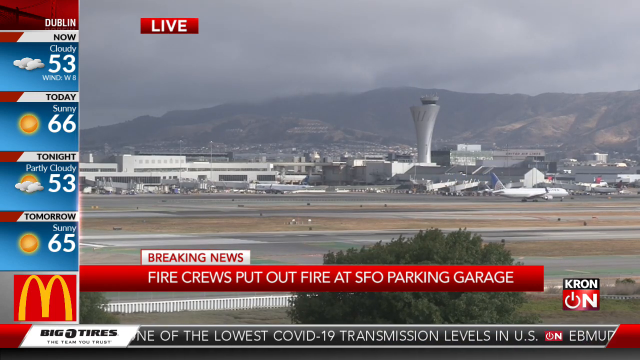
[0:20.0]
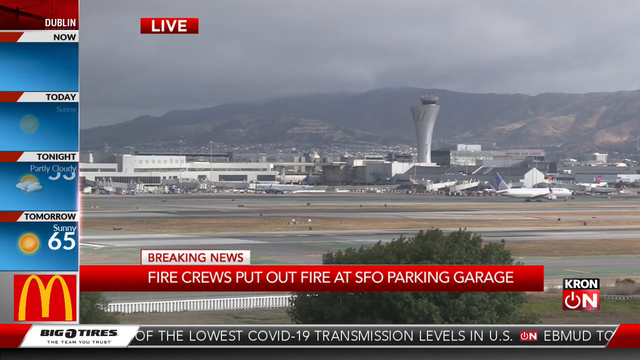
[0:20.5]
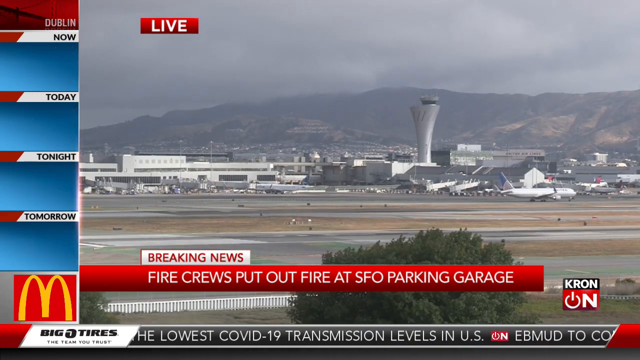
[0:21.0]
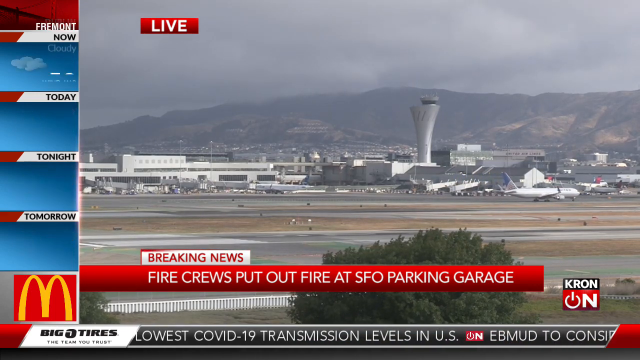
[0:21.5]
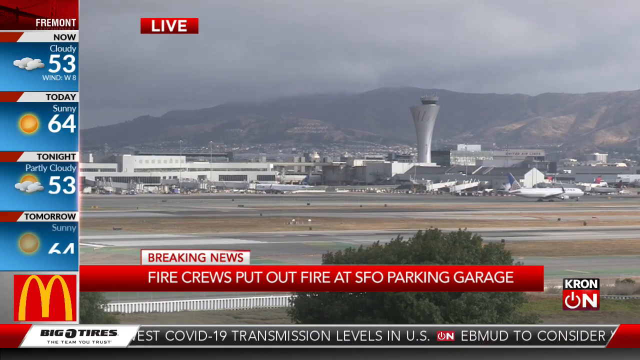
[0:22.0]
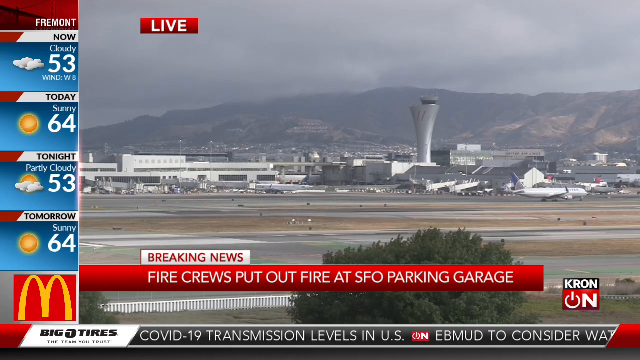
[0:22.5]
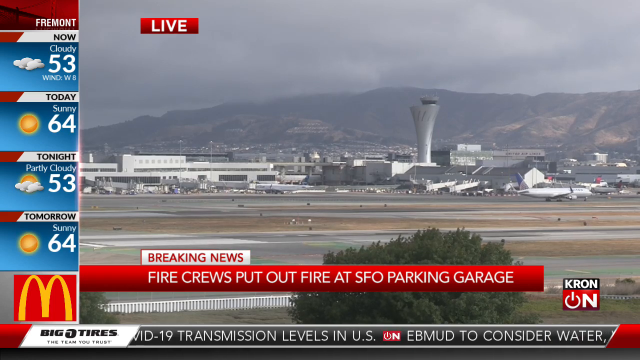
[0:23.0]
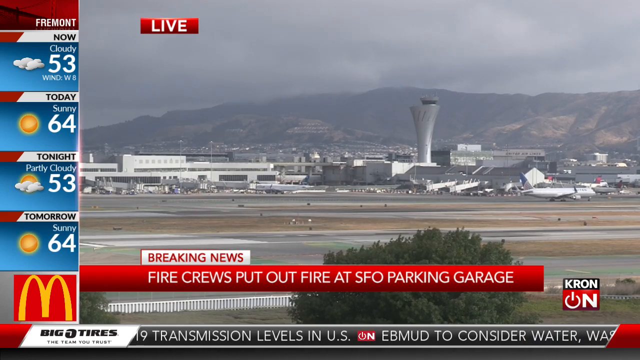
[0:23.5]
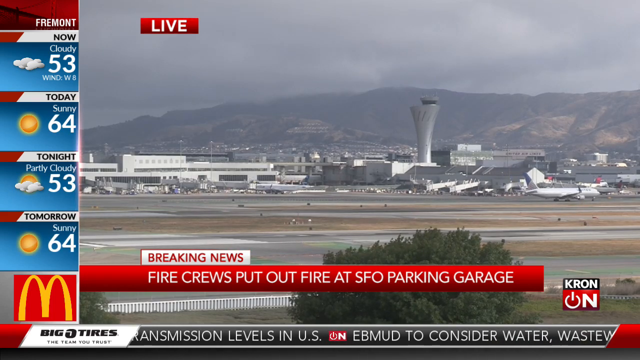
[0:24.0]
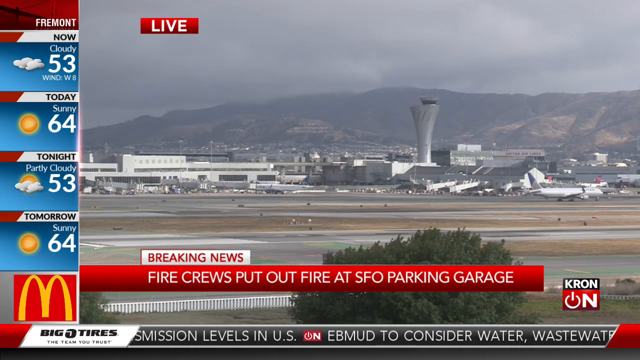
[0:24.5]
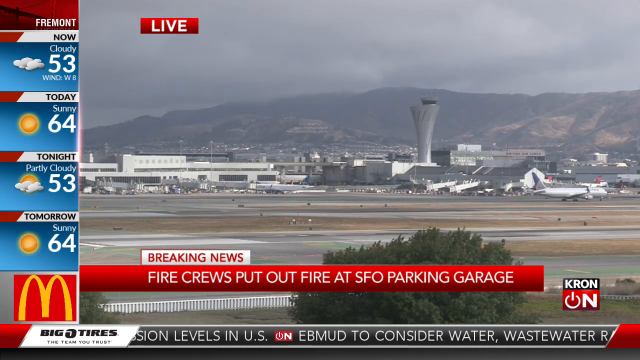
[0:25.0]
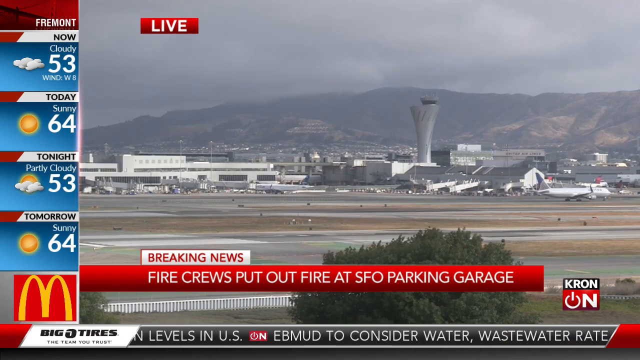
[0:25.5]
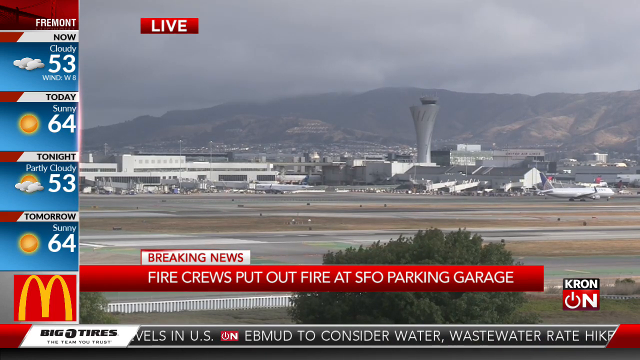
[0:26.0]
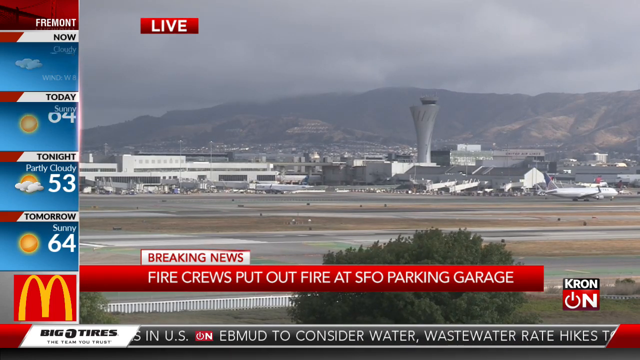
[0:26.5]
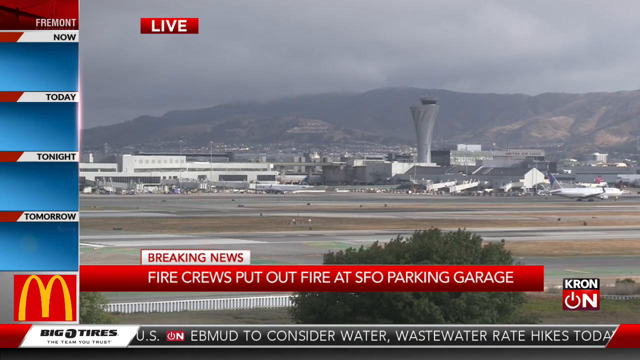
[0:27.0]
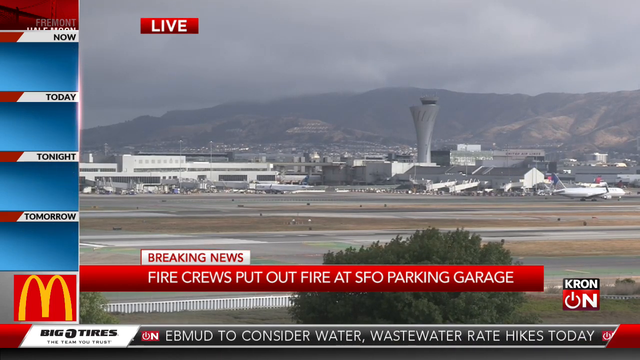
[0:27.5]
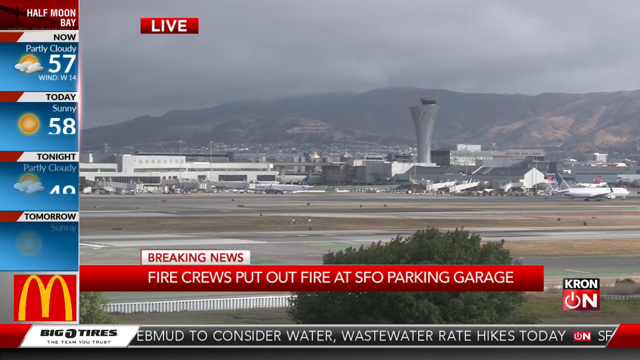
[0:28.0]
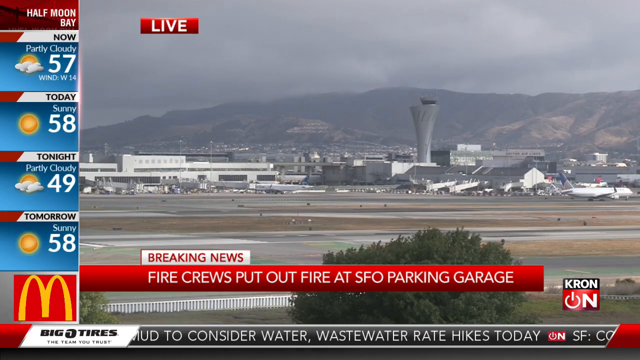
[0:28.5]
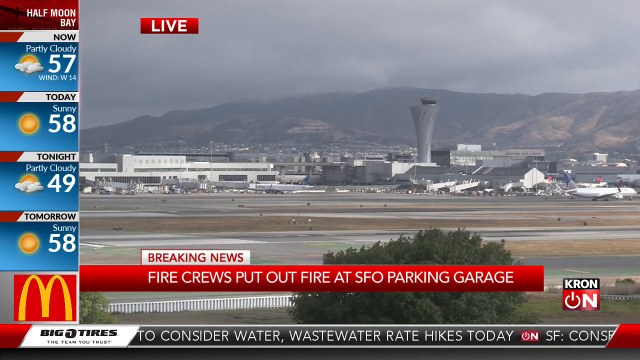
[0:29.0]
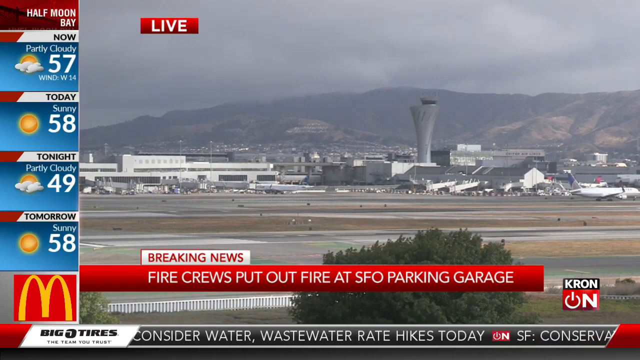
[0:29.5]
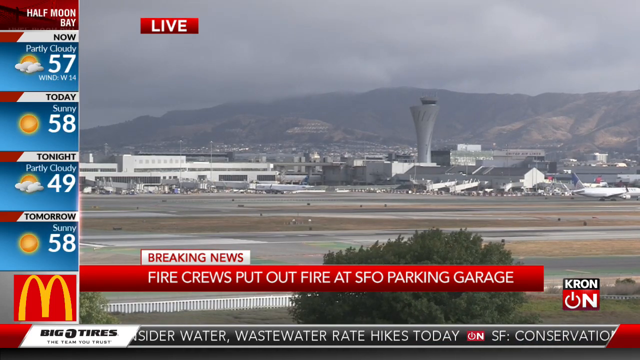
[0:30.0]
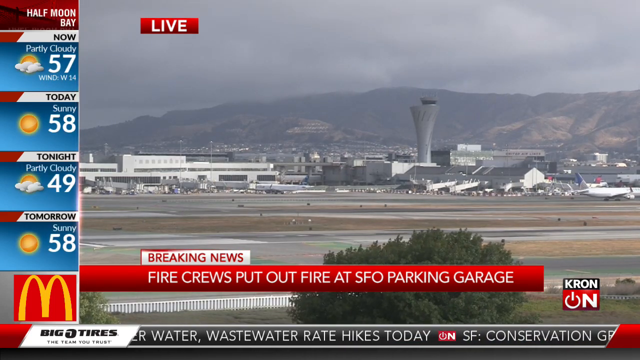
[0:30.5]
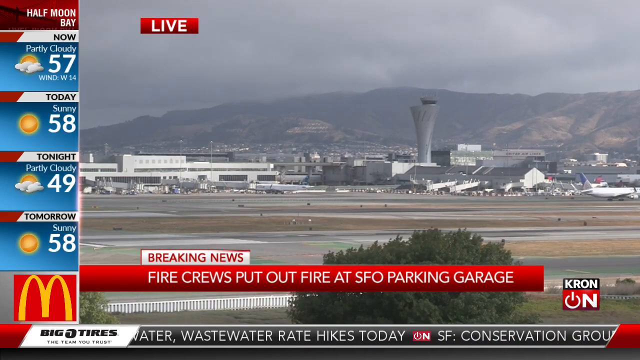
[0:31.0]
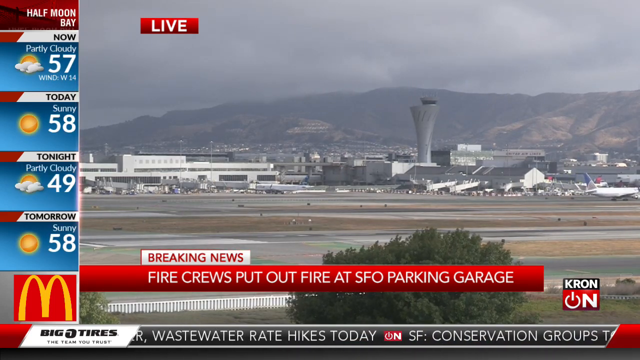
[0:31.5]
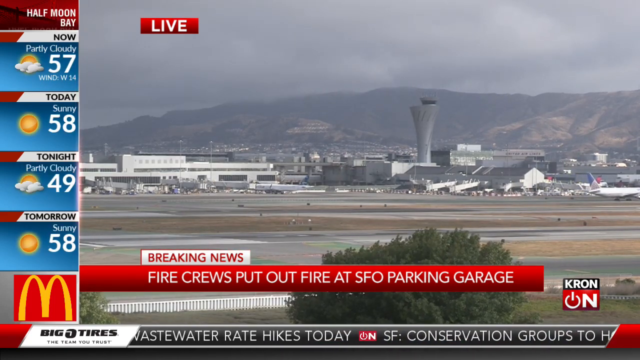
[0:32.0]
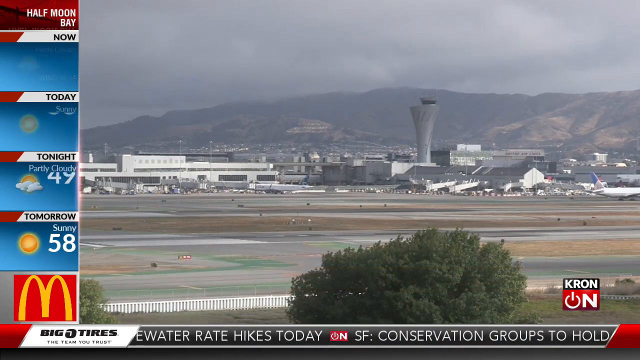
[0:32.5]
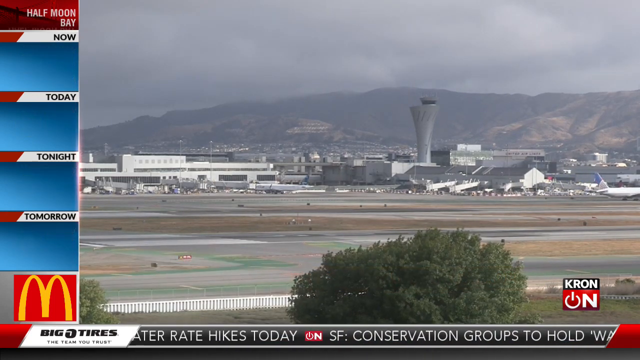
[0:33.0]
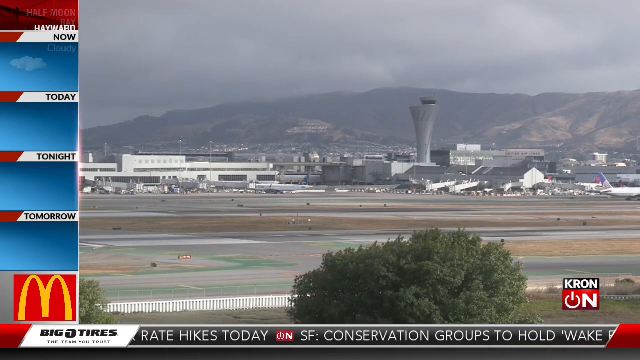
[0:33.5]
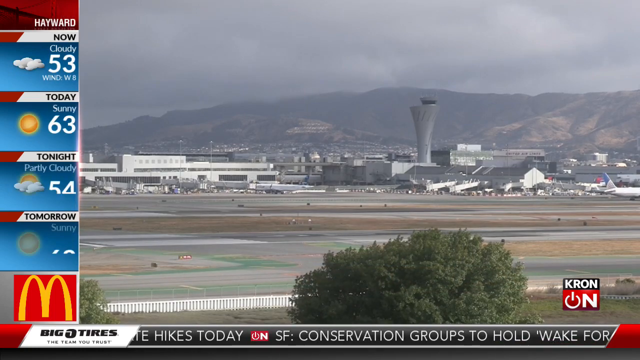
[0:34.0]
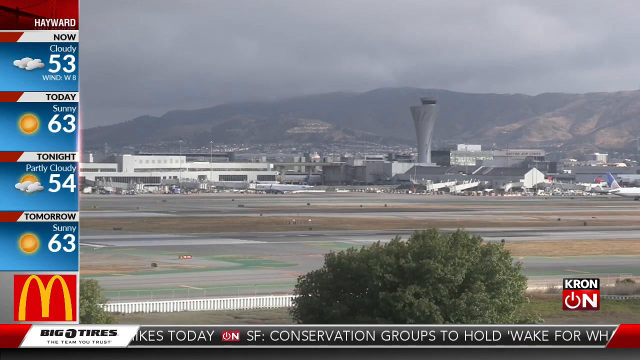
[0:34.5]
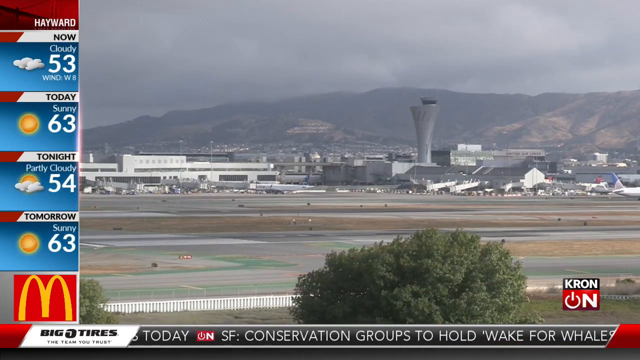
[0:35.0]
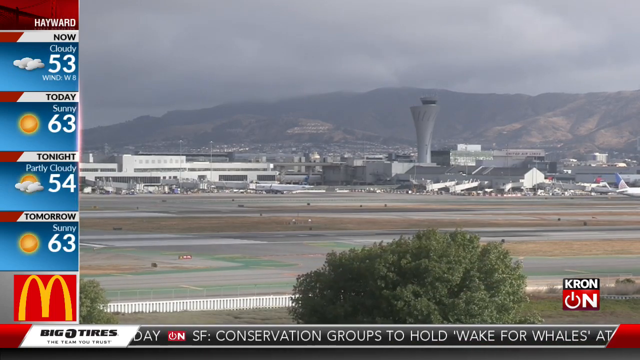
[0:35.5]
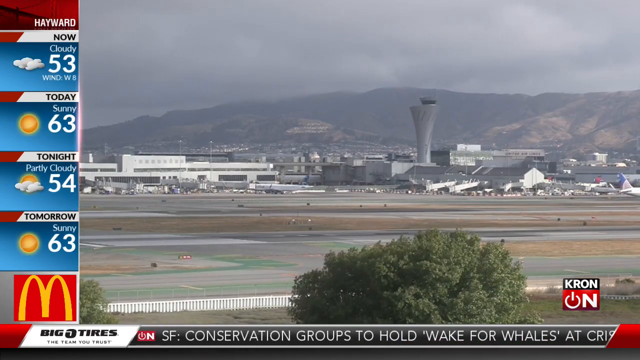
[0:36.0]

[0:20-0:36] The footage of the airline continues from a far distance. At the bottom center of the screen, the same red and white text reads "breaking news fire crews put out fire at SFO parking garage." Also at the bottom center, several news updates appear, including "COVID-19 transmission levels in U.S.," "to consider water wastewater rate hikes today" and "SF conservation groups to hold wake for whales." The video is in a rectangular shape, and the distant footage of the airline has a good amount of natural light, so everything is clear and visible.